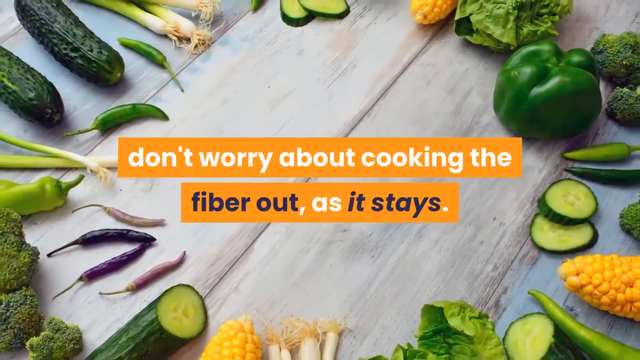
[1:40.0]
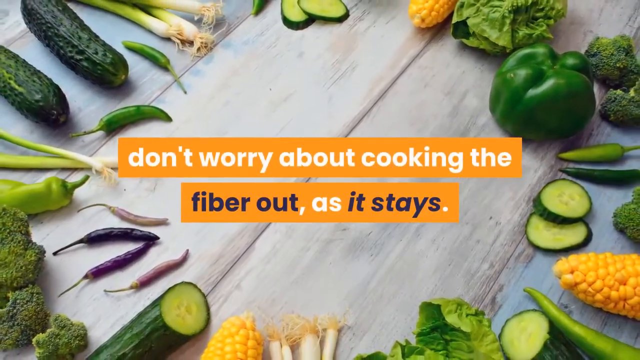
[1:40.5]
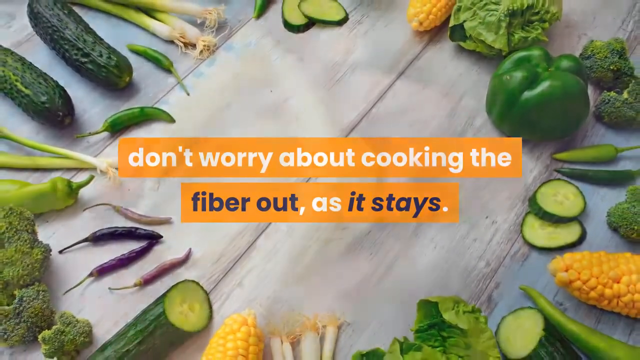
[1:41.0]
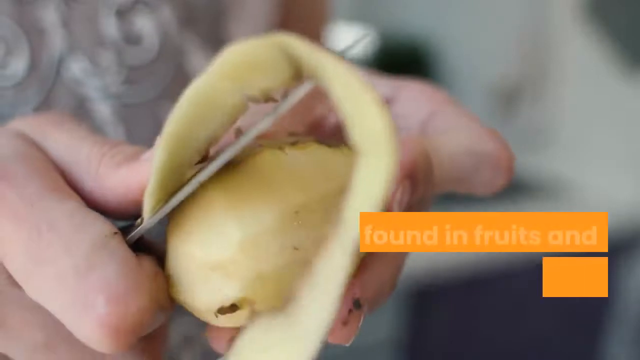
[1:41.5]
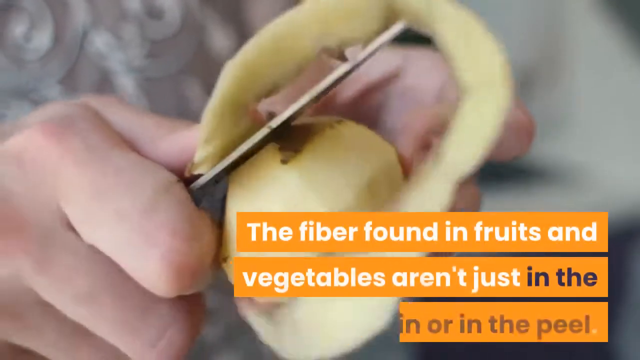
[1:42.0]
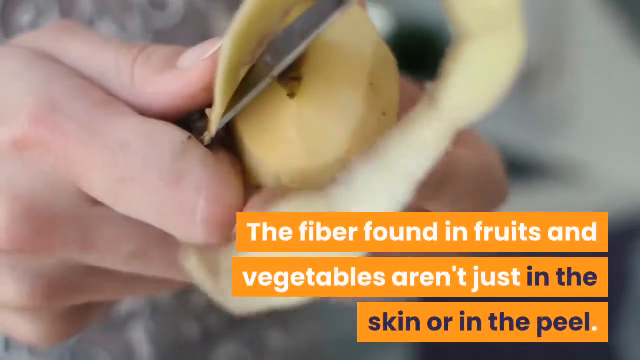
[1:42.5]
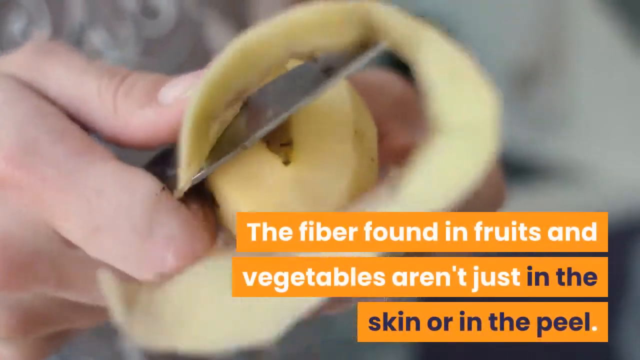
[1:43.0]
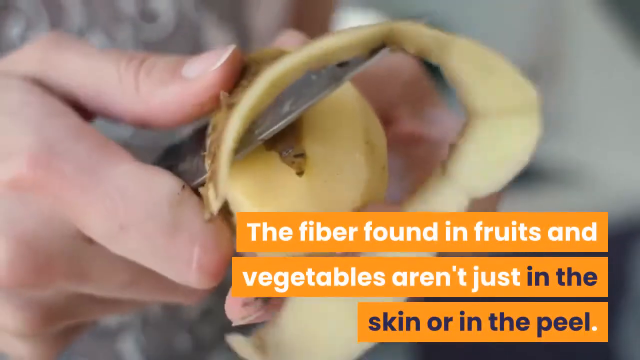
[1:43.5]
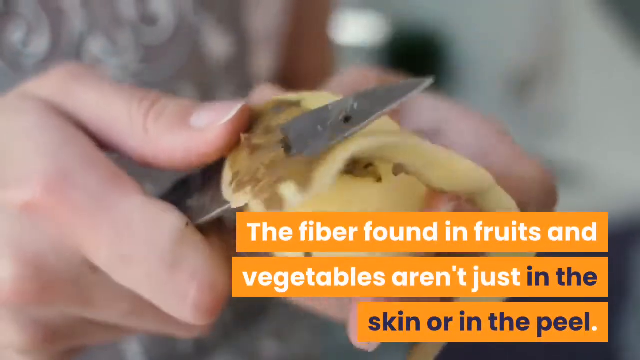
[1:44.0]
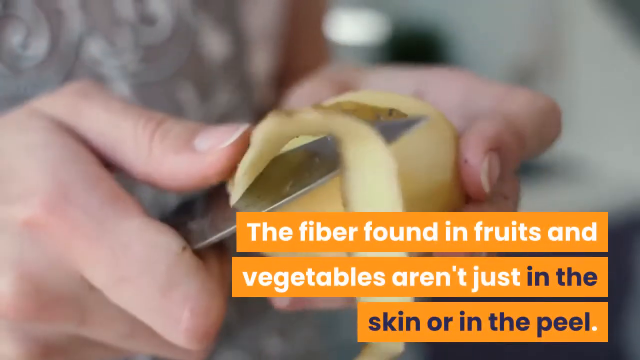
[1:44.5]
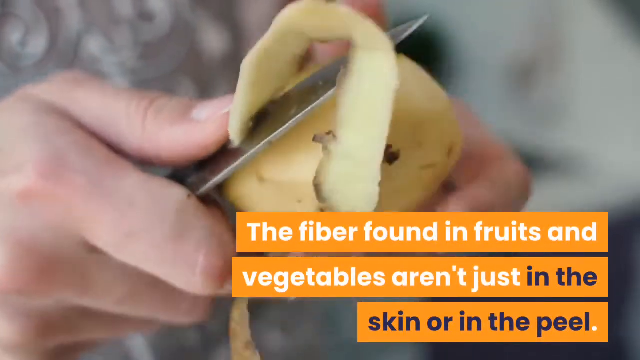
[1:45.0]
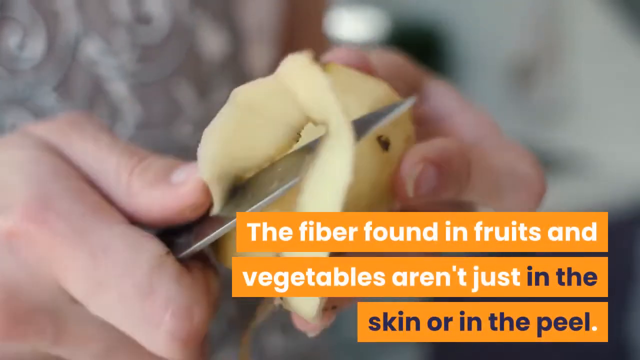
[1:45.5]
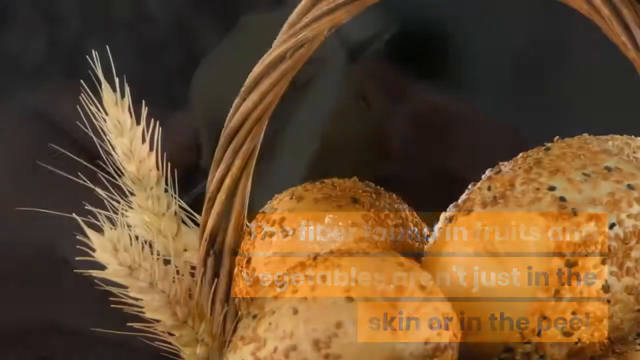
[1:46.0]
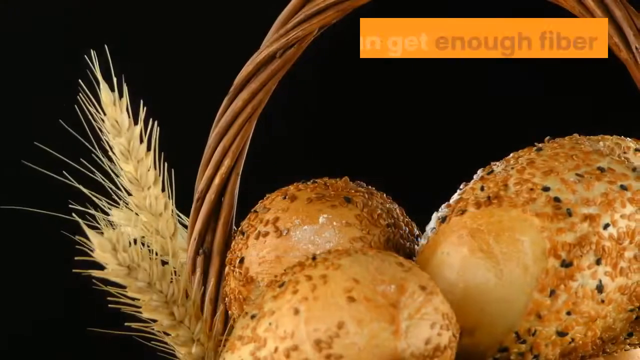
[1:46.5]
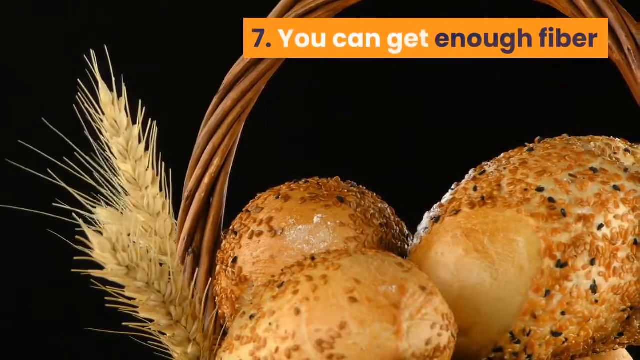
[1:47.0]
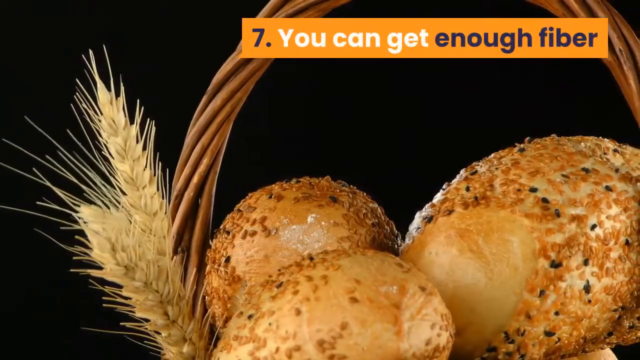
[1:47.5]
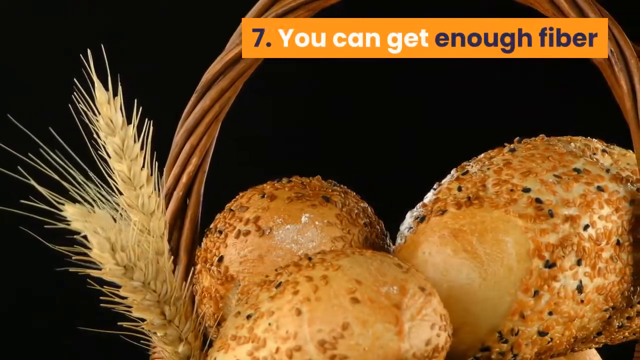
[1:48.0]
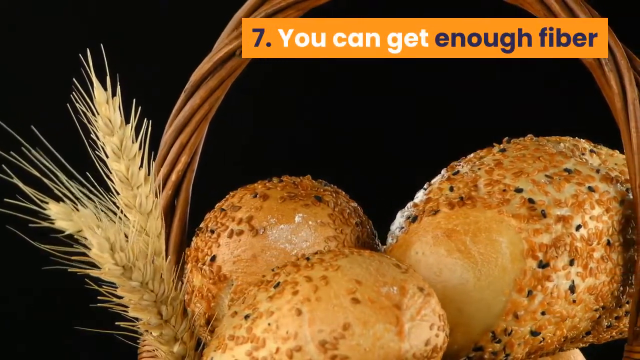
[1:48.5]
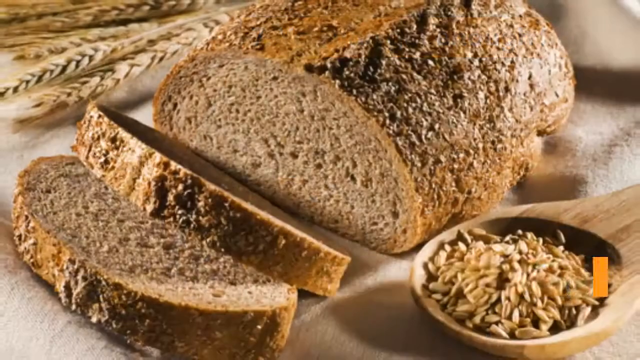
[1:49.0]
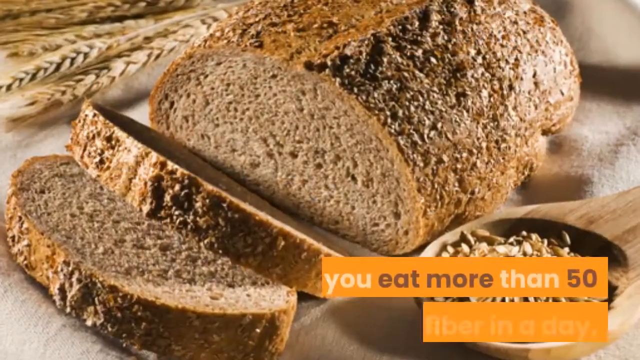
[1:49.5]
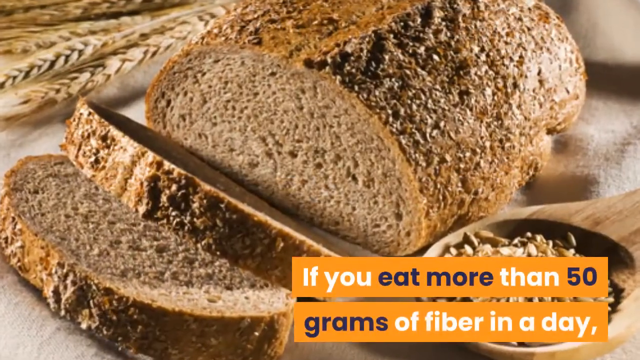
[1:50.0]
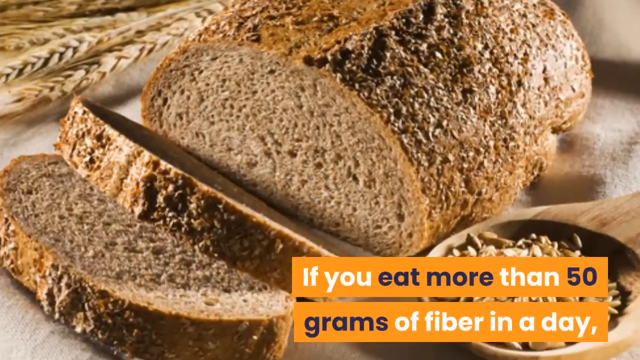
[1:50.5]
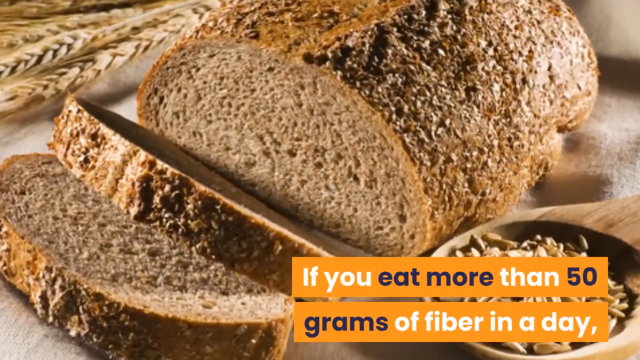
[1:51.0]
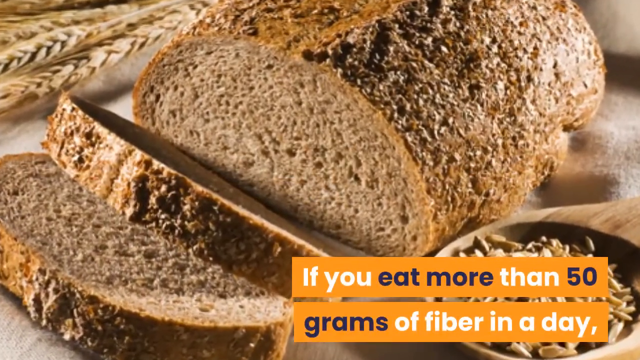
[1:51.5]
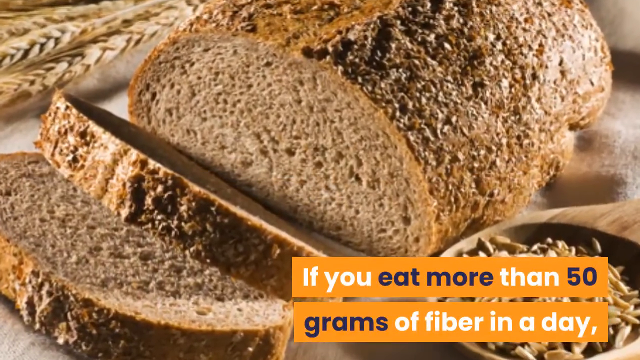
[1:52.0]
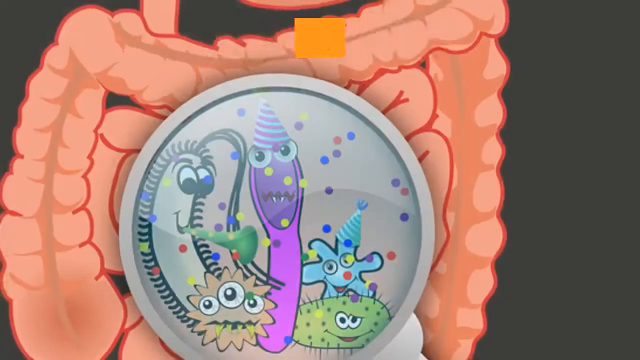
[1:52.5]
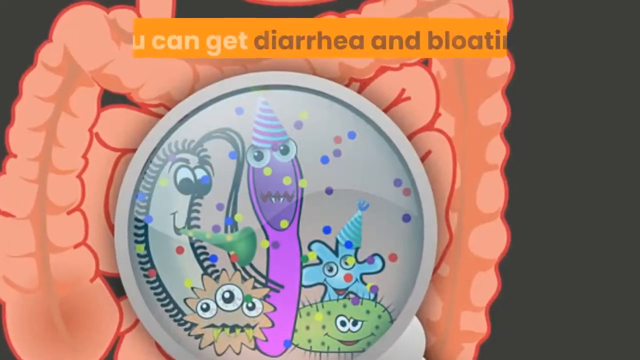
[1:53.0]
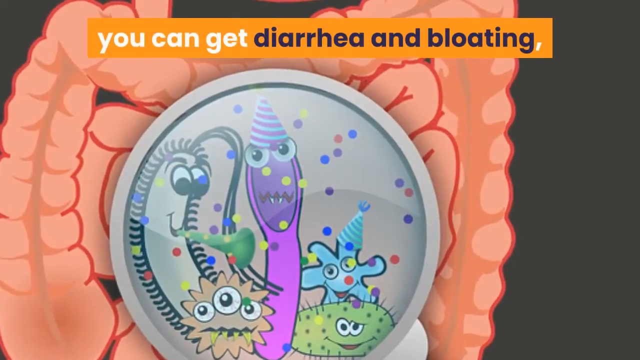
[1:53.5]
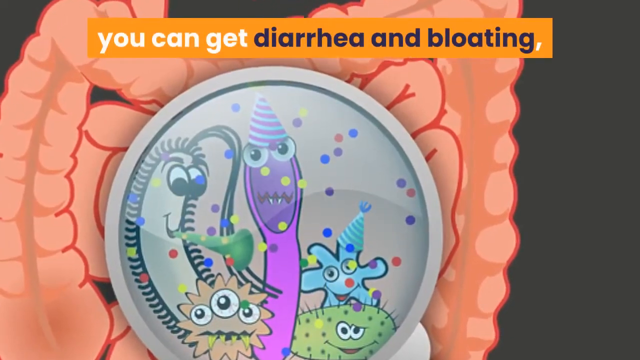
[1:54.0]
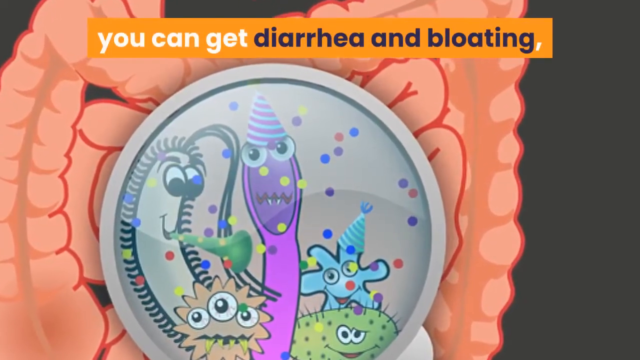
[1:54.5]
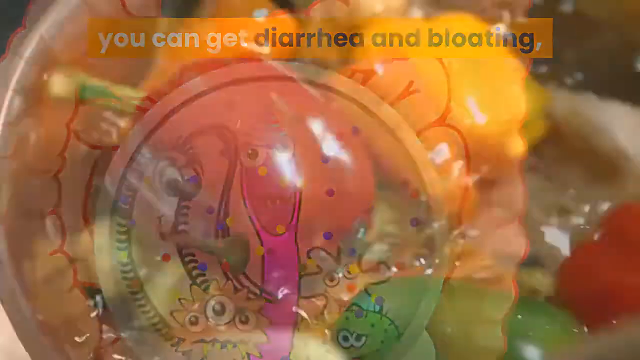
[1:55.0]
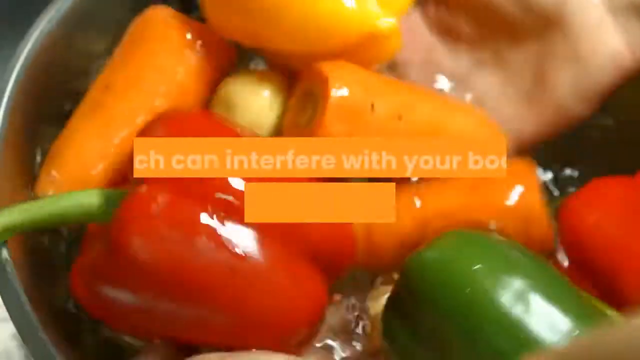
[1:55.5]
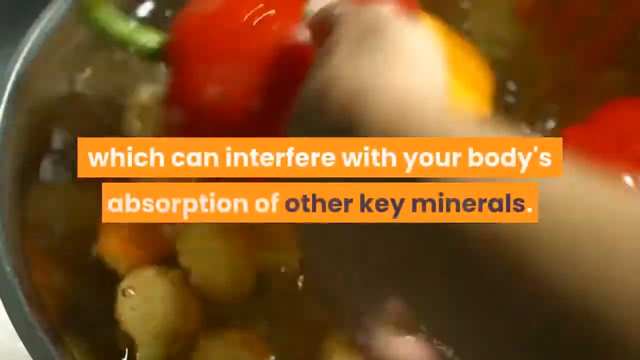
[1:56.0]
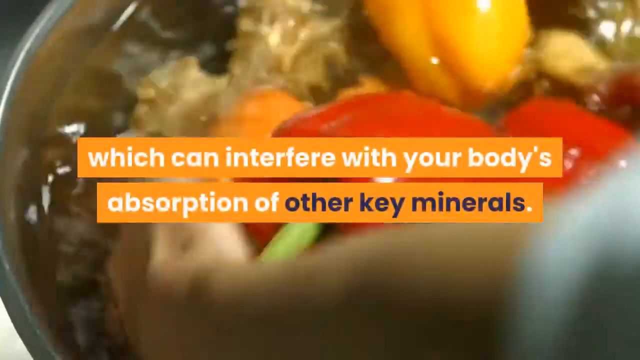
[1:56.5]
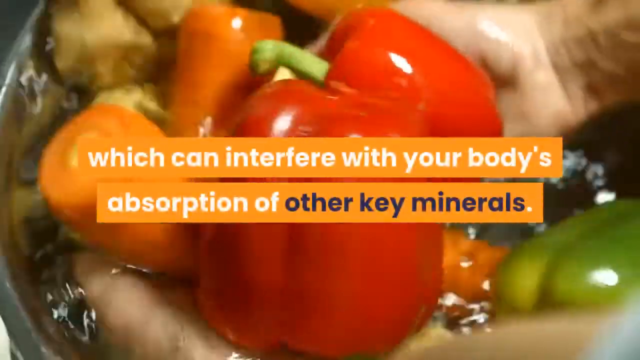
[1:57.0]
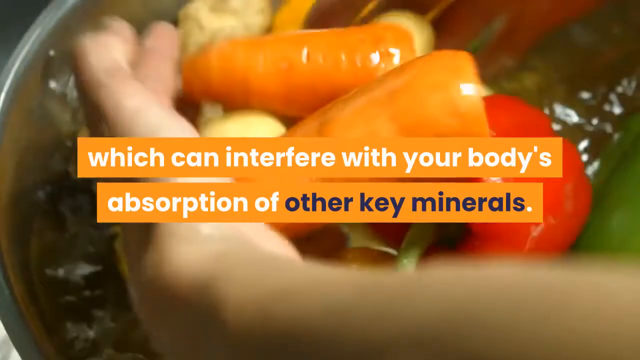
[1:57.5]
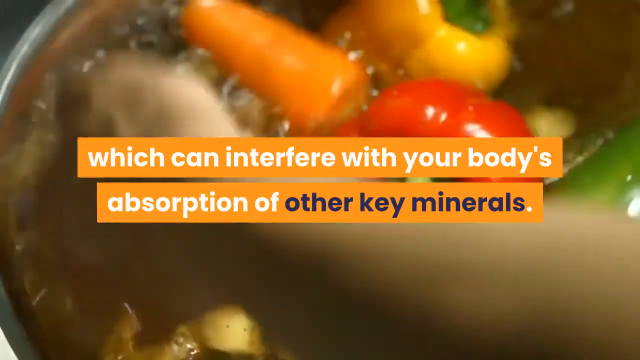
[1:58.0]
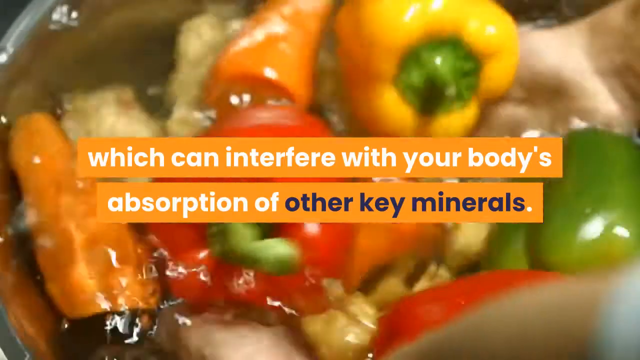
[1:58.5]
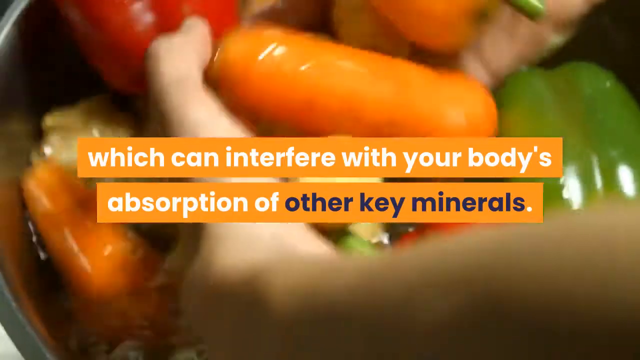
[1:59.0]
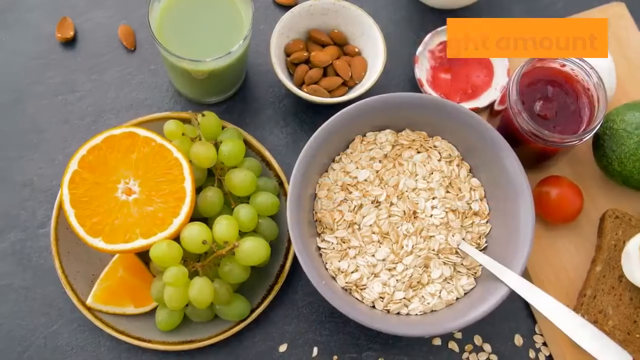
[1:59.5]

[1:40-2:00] The text "don't worry about cooking the fiber out as it stays" appears over a photo of a table with many different green and yellow vegetables. Then somebody peels a potato, with text saying the fruits and vegetables "aren't just in the skin or in the peel." Next, bread and grains are in a basket, with the text "You can get enough fiber if you eat more than 50 grams of fiber in a day"; the breads are darker browns. Text then reads "You can get diarrhea and bloating, which can interfere with your body's absorption of other key." Lastly, fast-moving text says something about getting the right amount of fiber in your diet not having to be difficult.